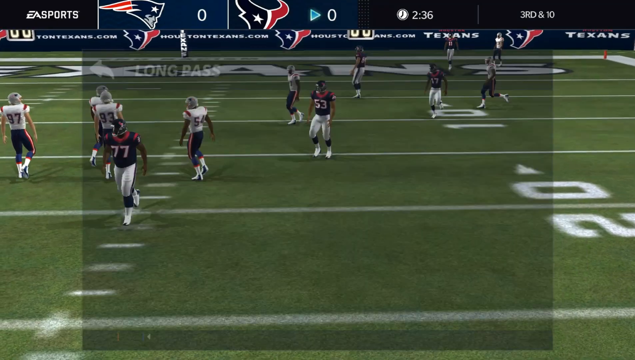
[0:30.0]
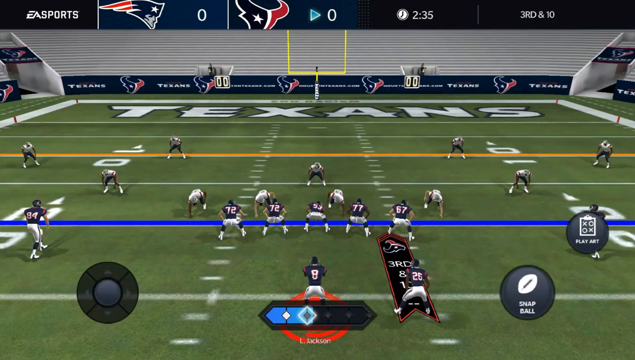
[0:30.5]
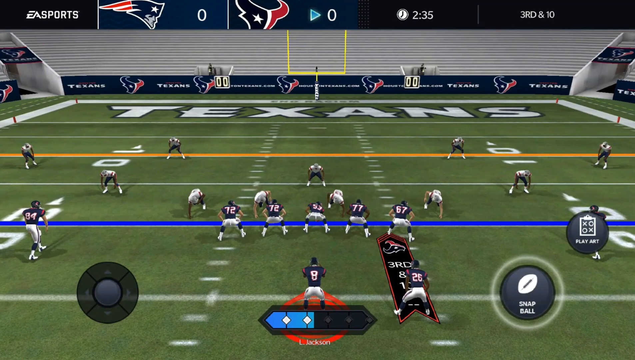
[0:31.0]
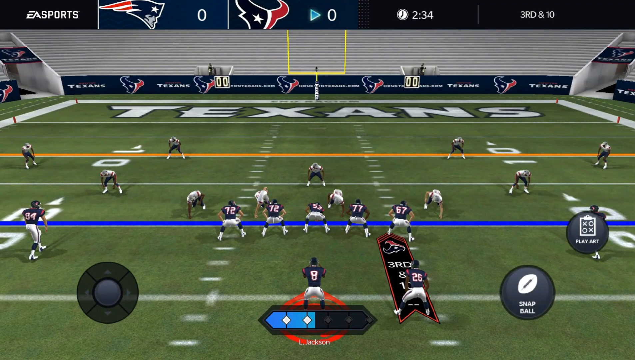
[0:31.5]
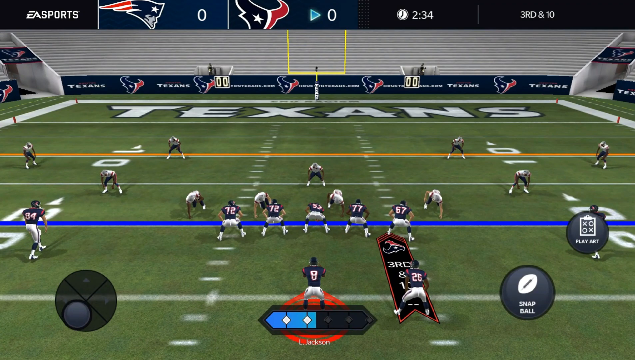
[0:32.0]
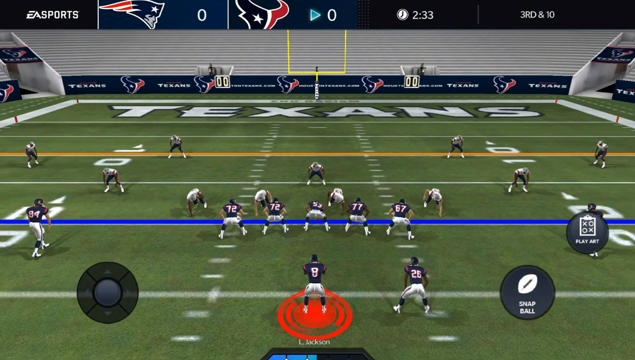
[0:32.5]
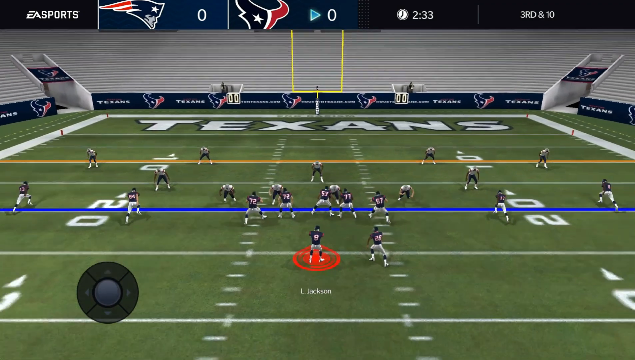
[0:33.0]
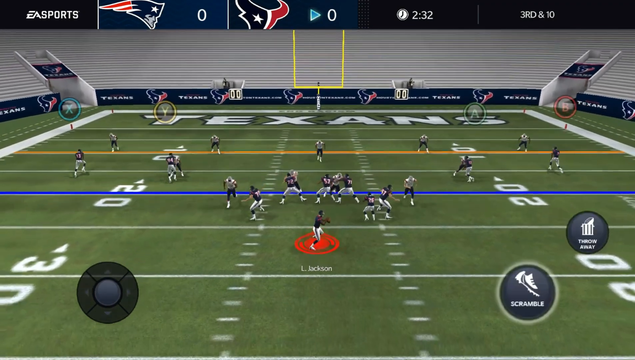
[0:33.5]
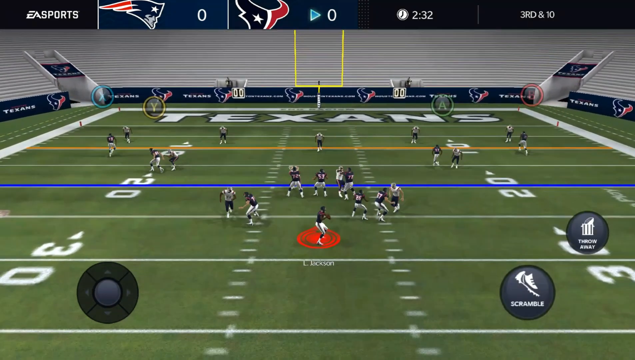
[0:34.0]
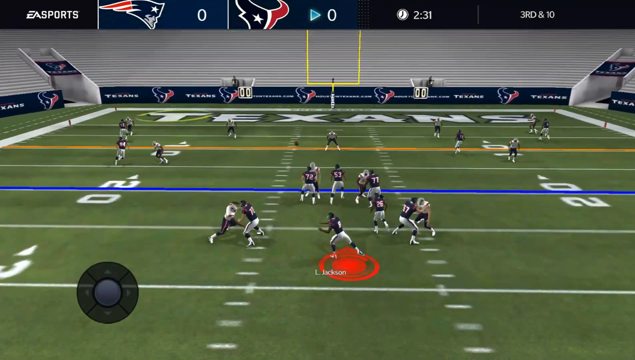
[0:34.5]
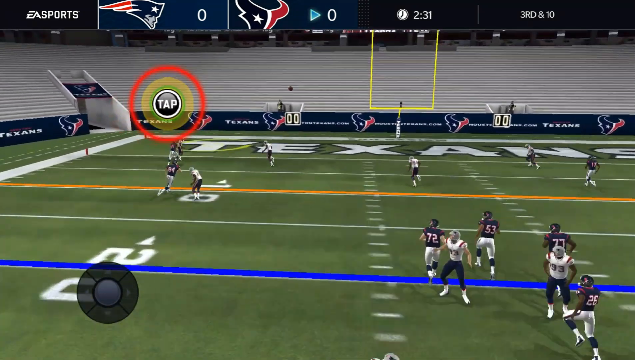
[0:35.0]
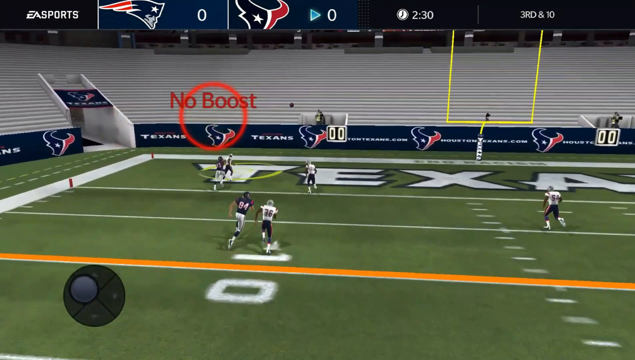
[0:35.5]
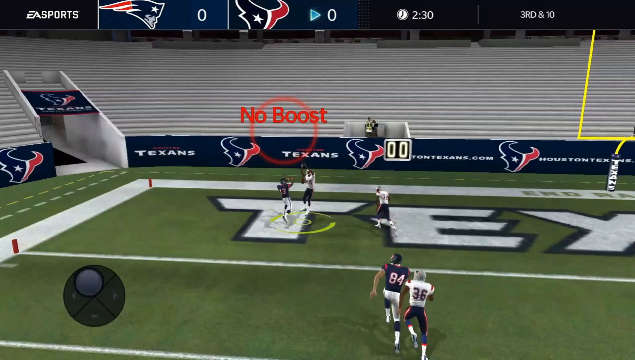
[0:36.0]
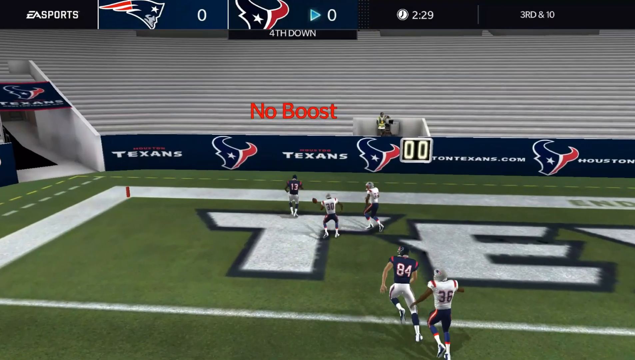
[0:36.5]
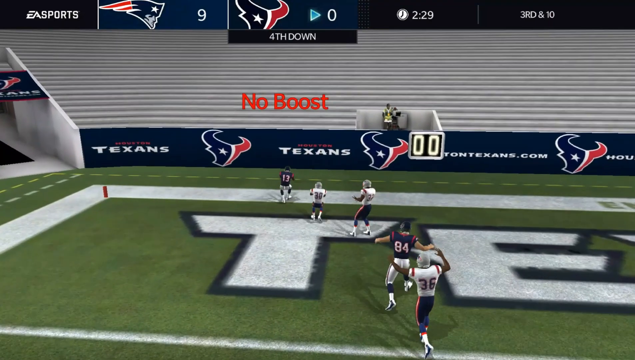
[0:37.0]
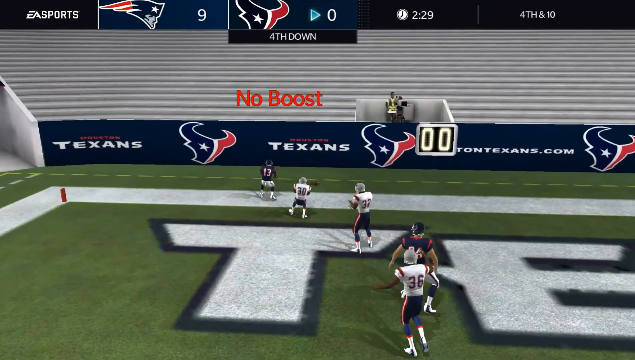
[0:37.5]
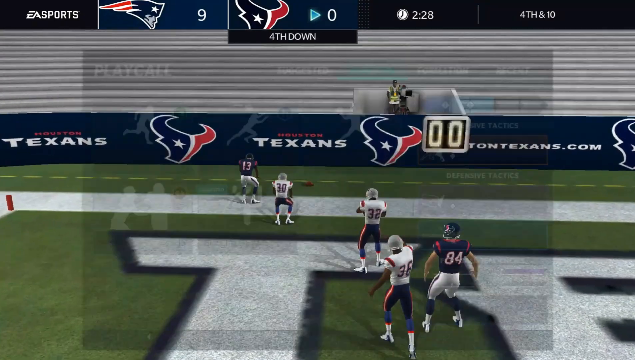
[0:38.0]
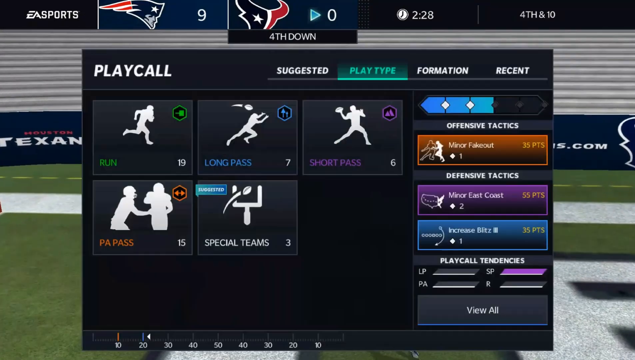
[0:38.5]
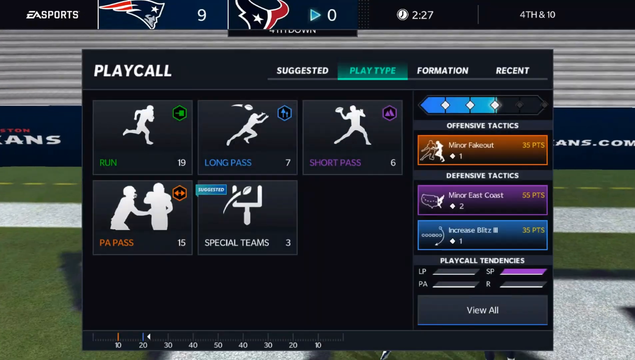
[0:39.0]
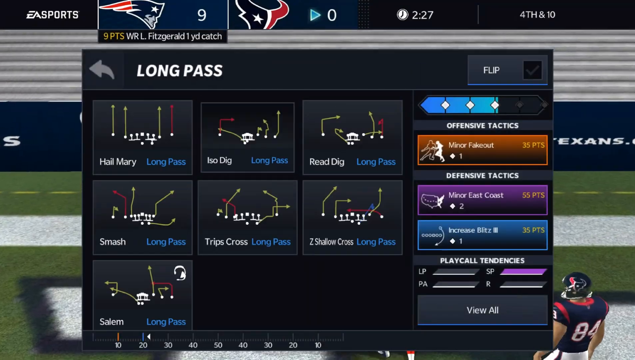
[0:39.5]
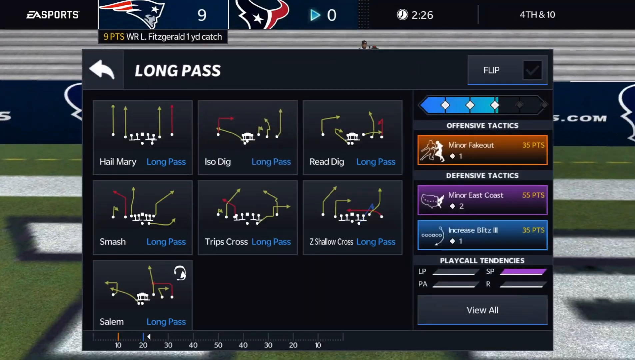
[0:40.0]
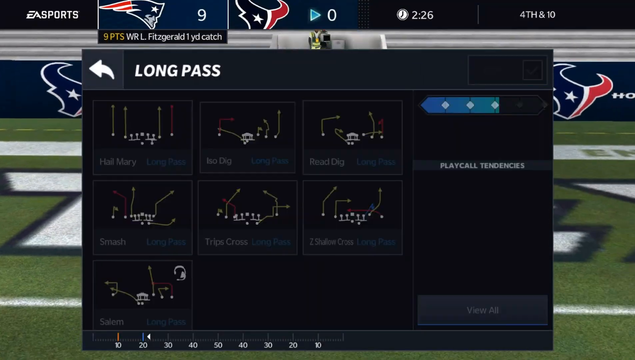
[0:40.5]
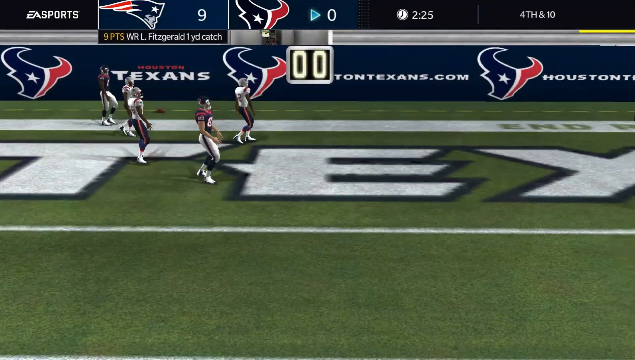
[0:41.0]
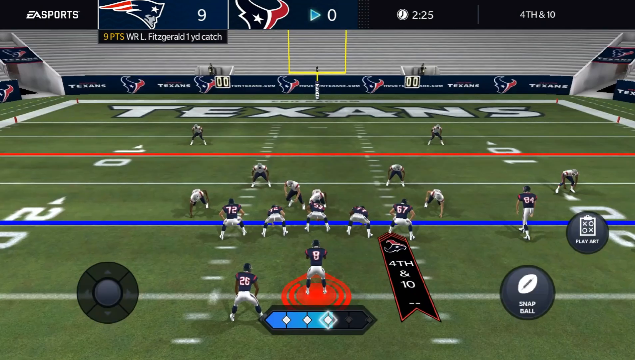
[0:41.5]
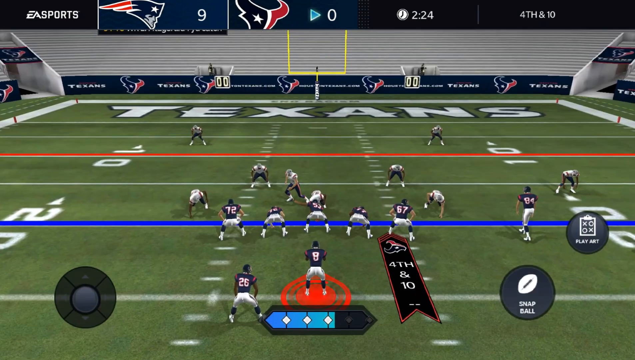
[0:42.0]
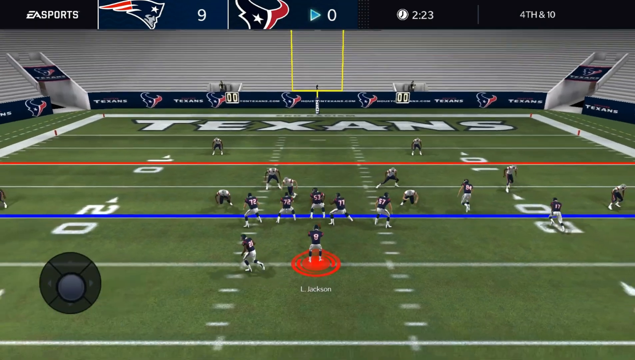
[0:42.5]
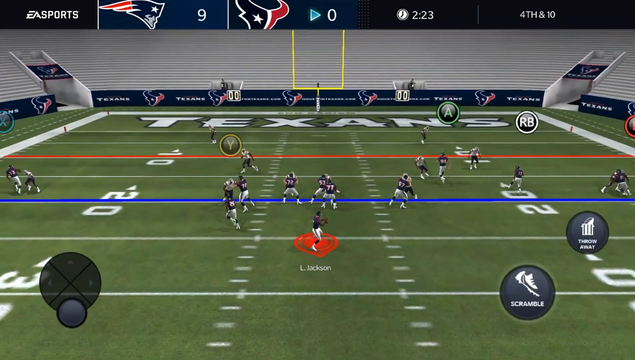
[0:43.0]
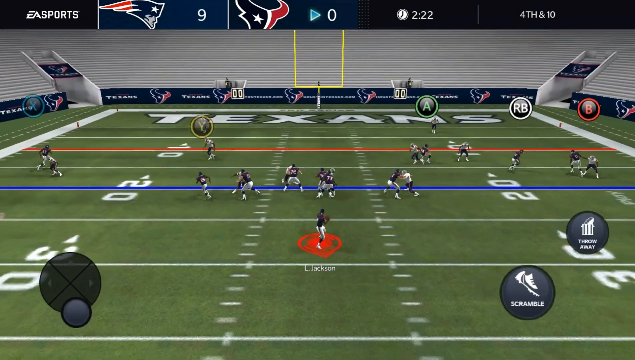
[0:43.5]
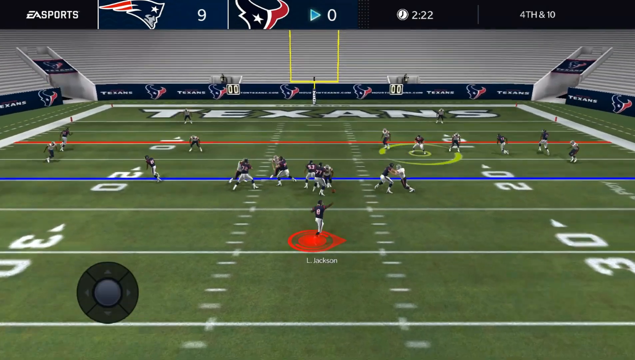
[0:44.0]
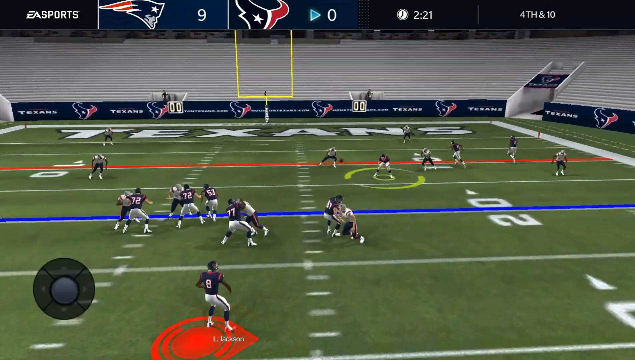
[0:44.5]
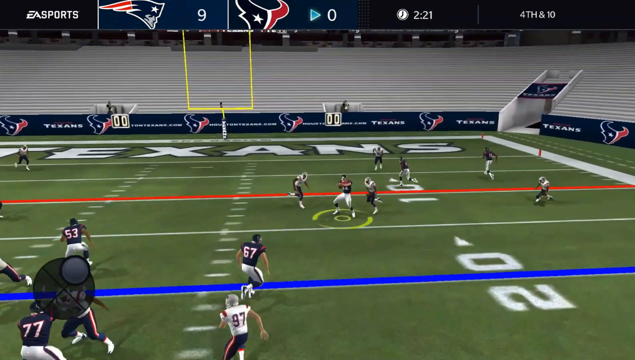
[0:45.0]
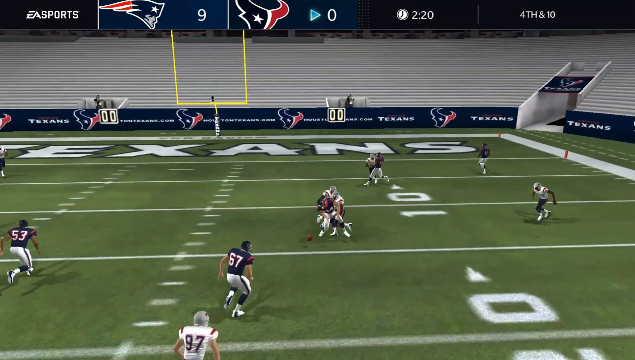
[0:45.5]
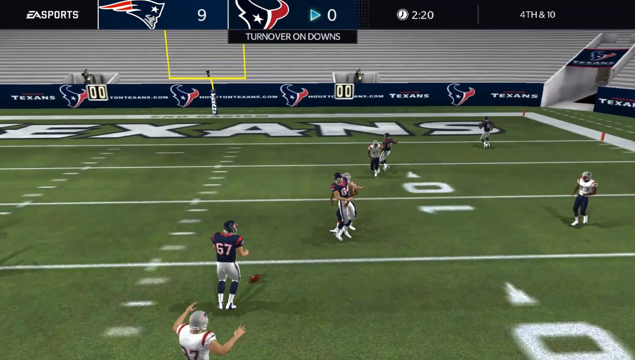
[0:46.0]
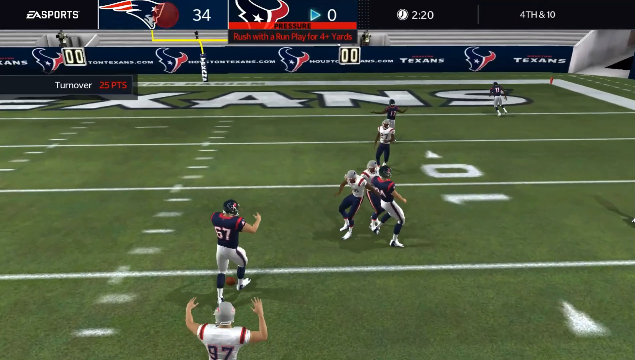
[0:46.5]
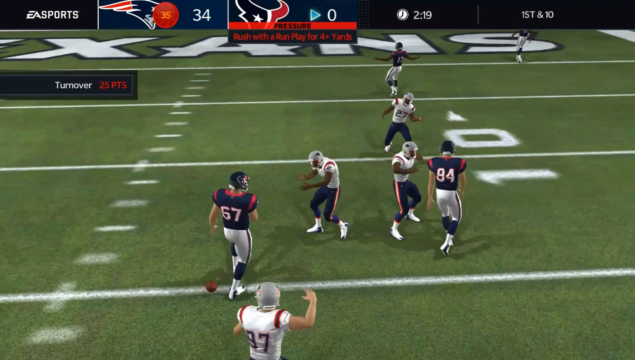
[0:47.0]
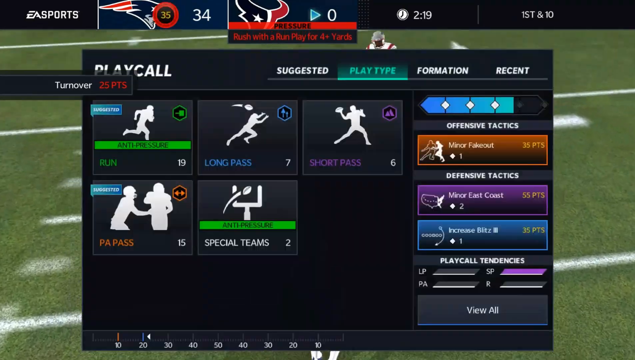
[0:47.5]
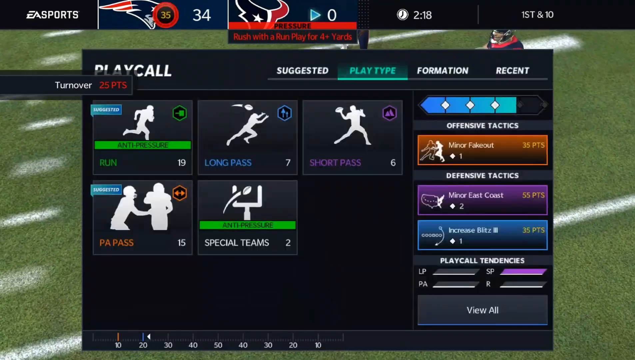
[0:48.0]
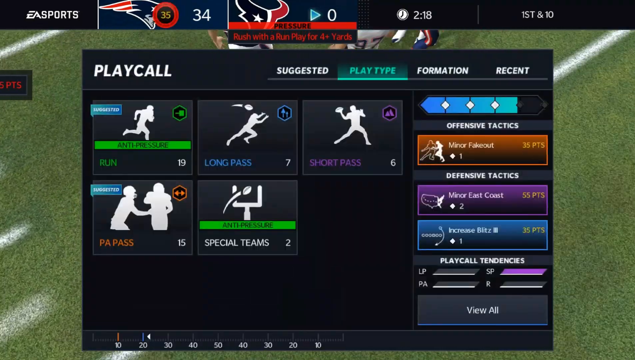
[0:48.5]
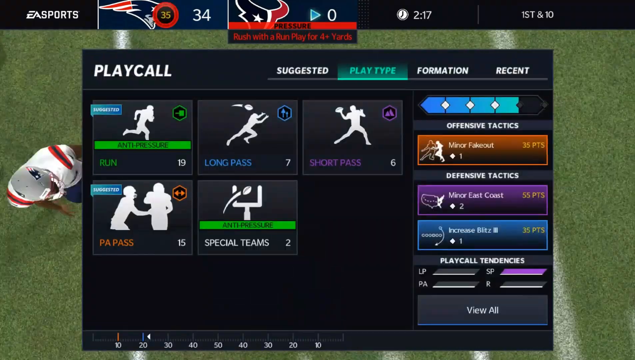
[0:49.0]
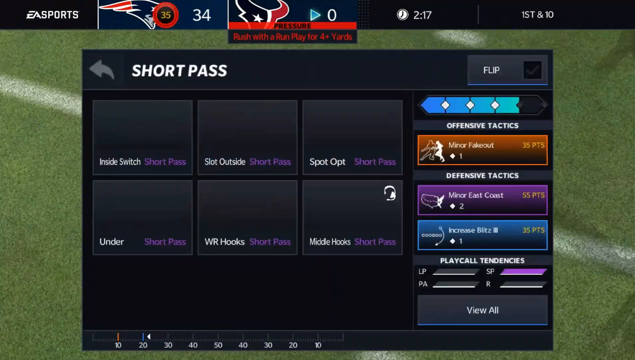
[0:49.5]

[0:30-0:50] Someone plays an official National Football League game between the Texans and the Patriots, and the player seems to be controlling the Texans. The team is at the 20-yard line, attempting to score a touchdown. A tap prompt appears, which the player misses, and the screen says "no boost". A UI element pops up listing play types and tactics; the player chooses long pass and then ISO dig. Button prompts for A, RB, and B appear, indicating a console controller. The ball is intercepted and the team fails to score. The UI element pops up again, and the player selects a short pass.